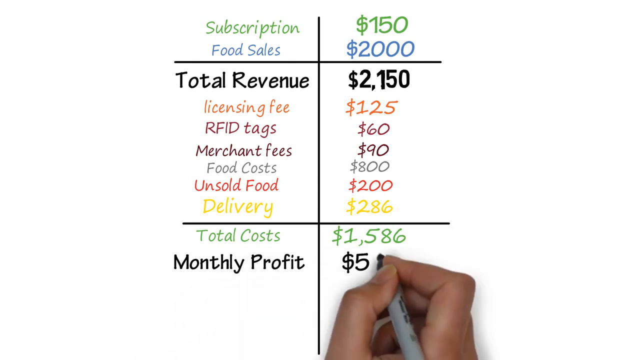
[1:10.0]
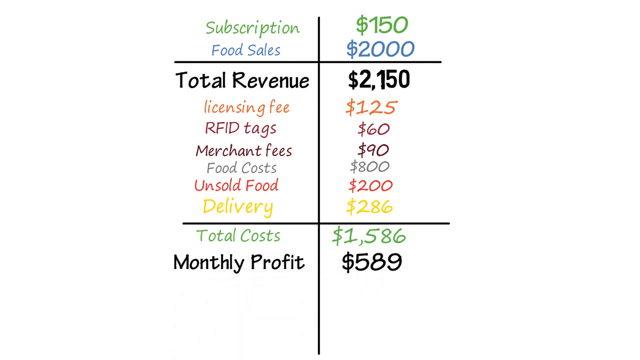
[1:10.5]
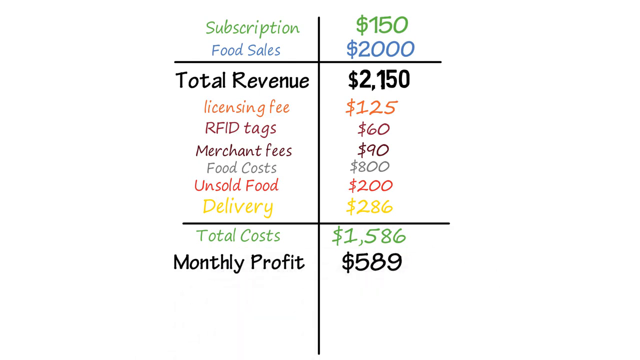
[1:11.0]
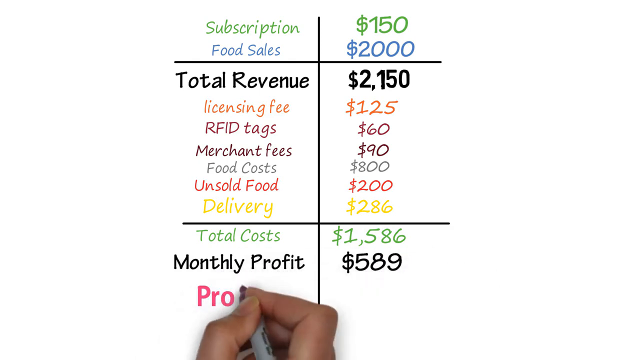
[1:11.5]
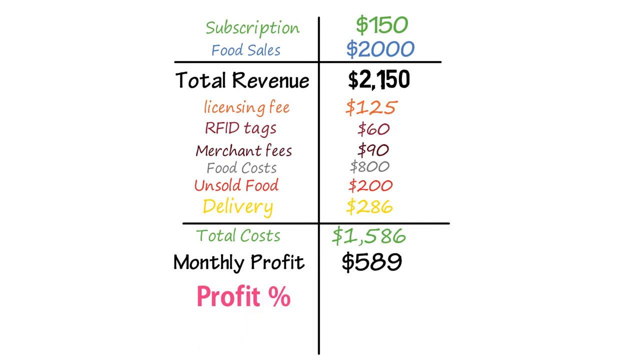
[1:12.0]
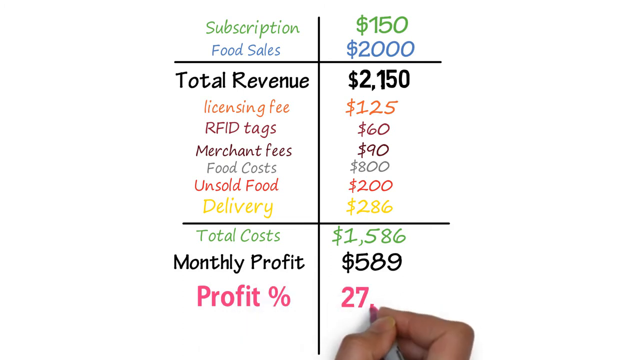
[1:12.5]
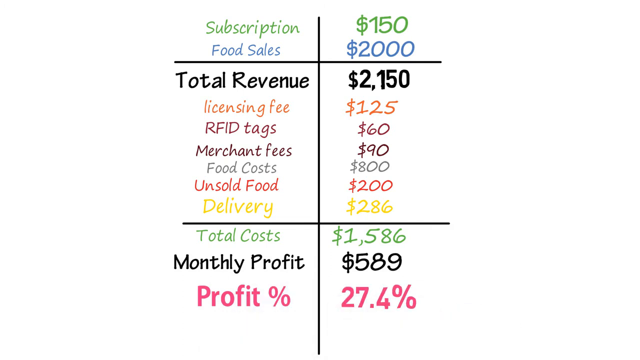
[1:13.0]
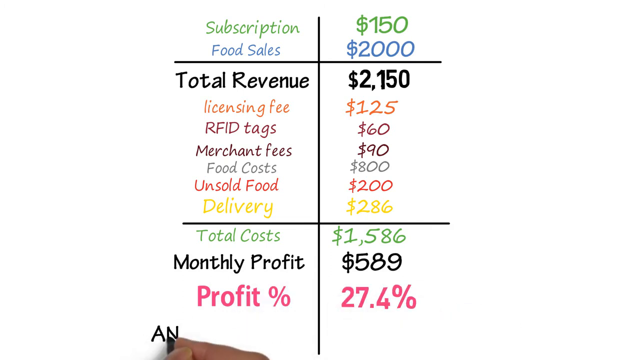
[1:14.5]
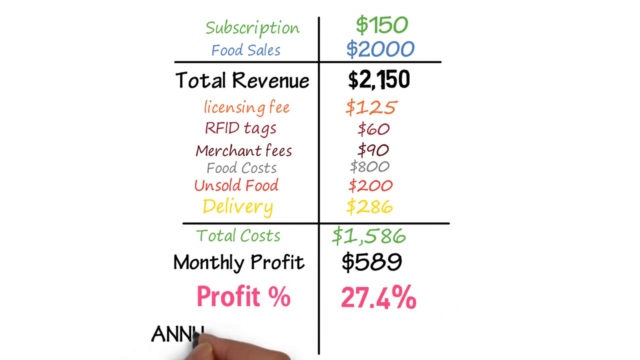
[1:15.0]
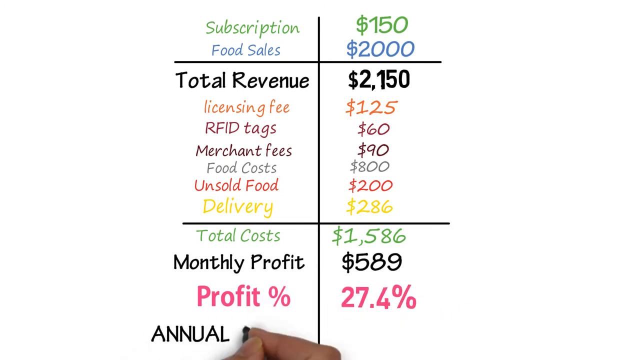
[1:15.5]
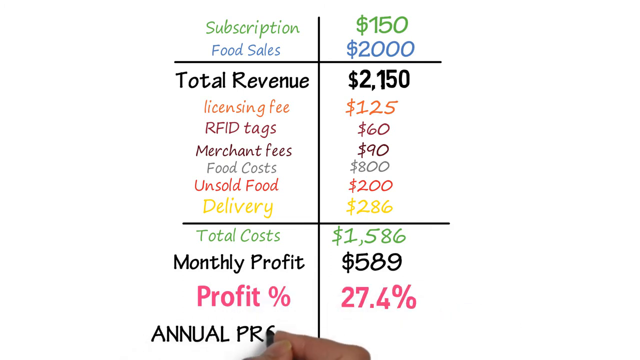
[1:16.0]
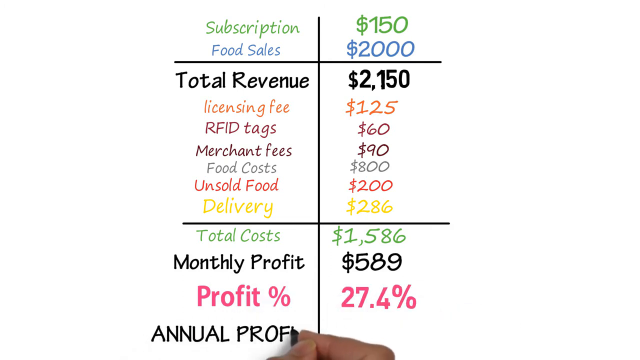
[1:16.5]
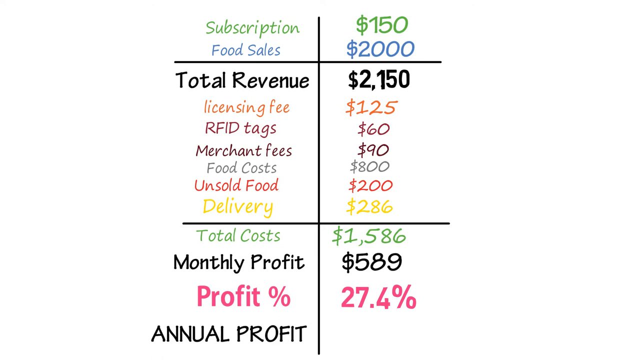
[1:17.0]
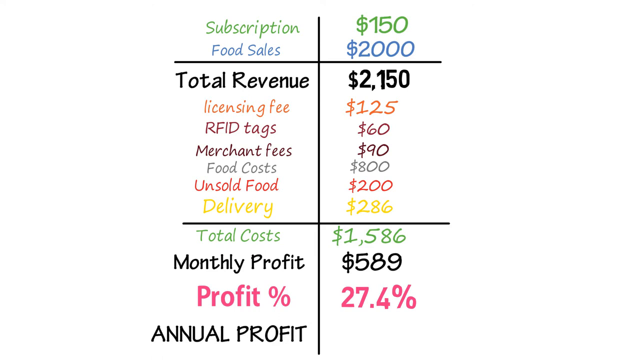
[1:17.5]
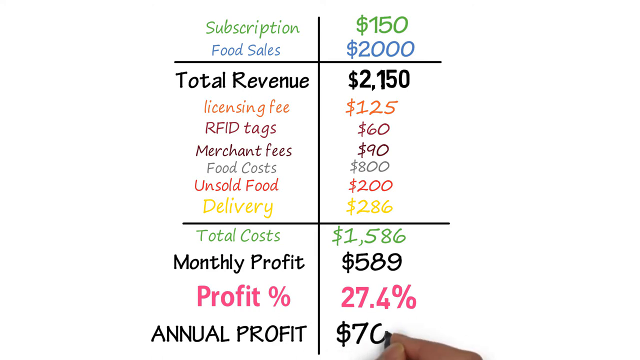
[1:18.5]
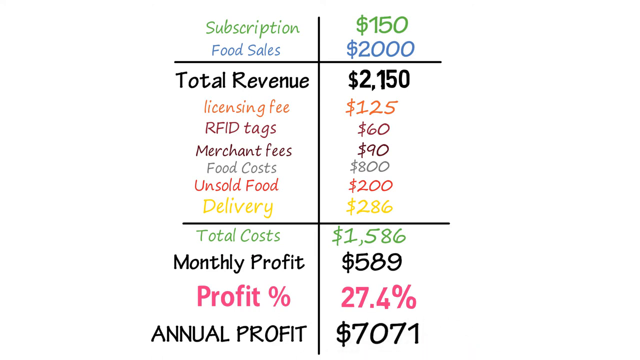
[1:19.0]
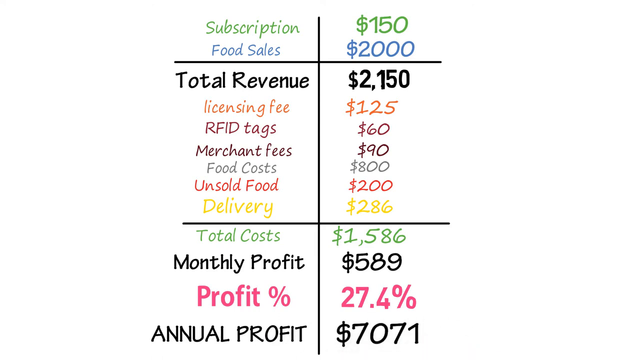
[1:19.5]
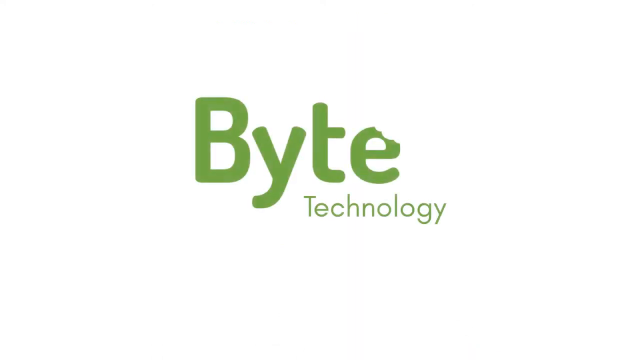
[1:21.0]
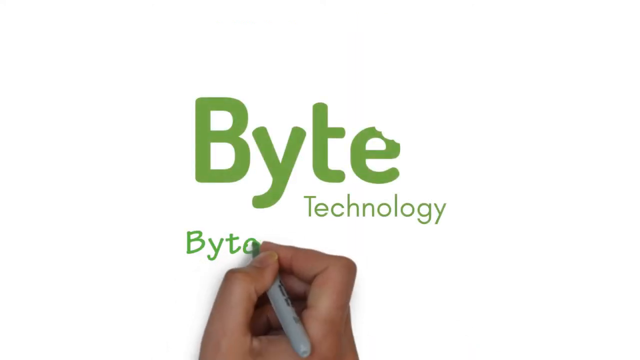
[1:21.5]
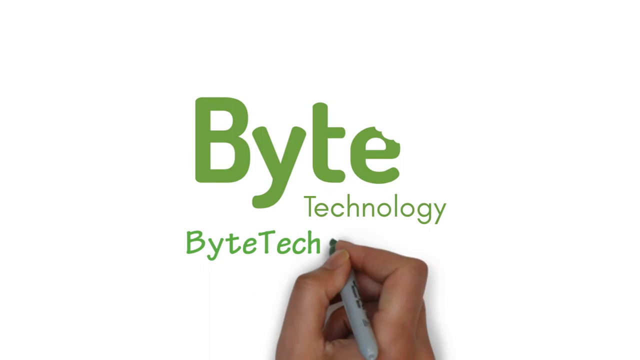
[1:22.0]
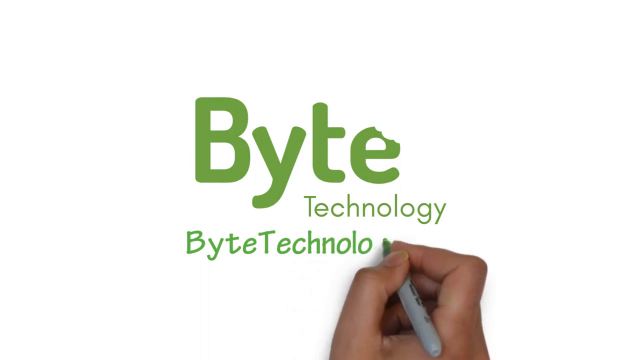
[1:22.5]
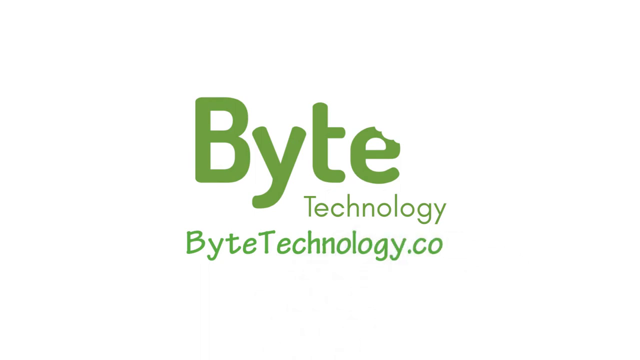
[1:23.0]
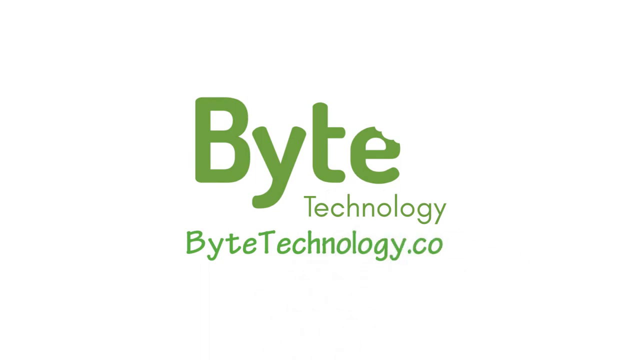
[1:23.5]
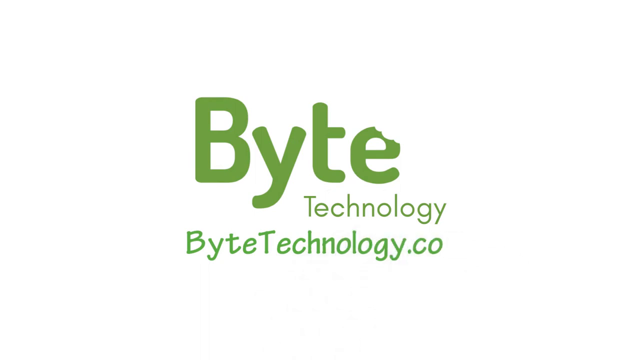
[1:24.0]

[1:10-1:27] After "monthly profit", "profit percentage" and then "annual profit" are written on the left side. On the right side, next to monthly profit, "$589.00" is written in bold black ink. For the profit percentage, "27.4%" is written in pink ink. "Annual profit" is written on the left in normal, non-bold black ink, and on the right in the same ink the amount "$7,071.00". The video then transitions to a white screen with the Byte Technology logo in green text, and right under the logo "ByteTechnology.co" is written in the same green color, after which the video stops.